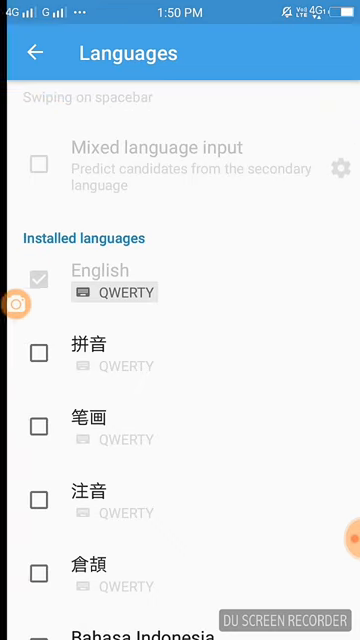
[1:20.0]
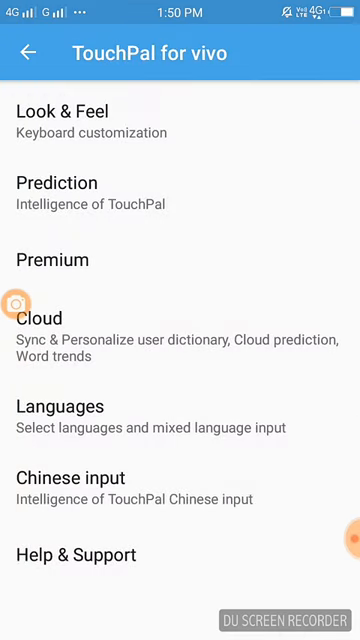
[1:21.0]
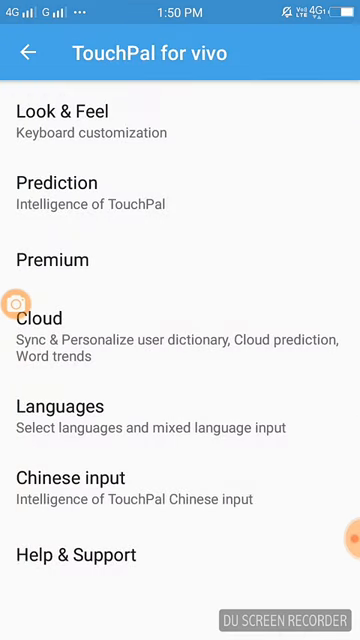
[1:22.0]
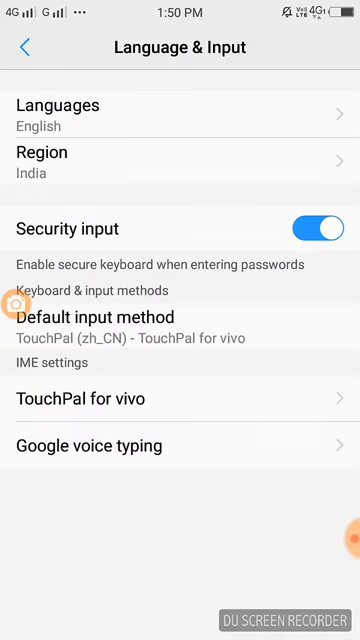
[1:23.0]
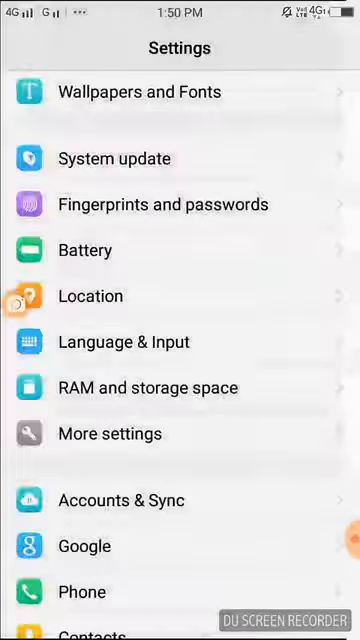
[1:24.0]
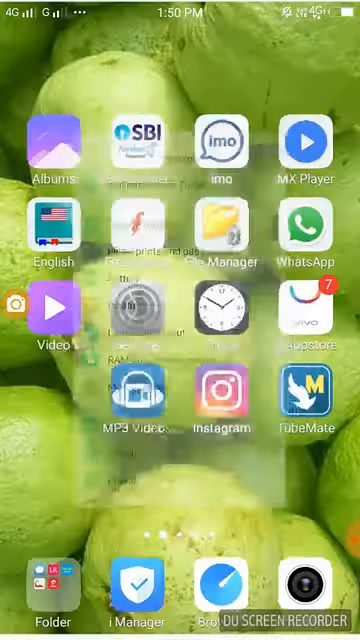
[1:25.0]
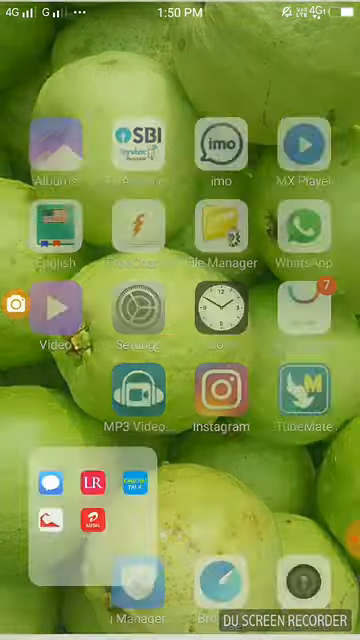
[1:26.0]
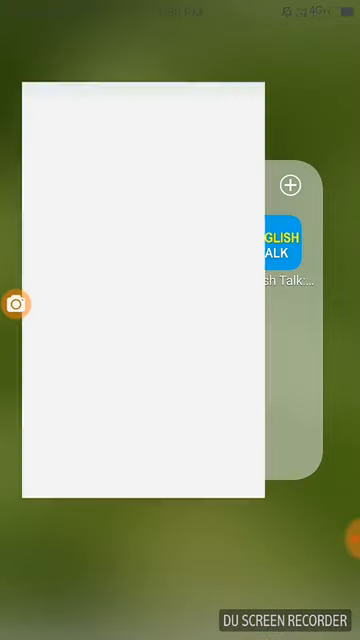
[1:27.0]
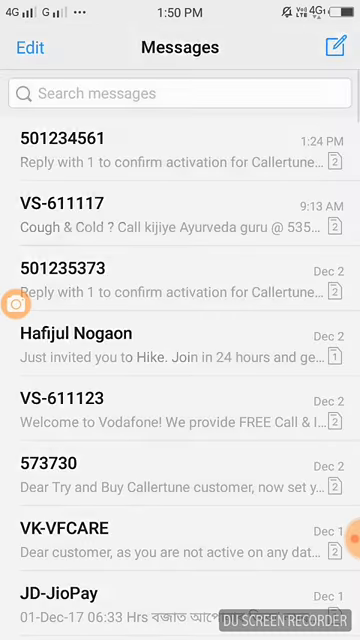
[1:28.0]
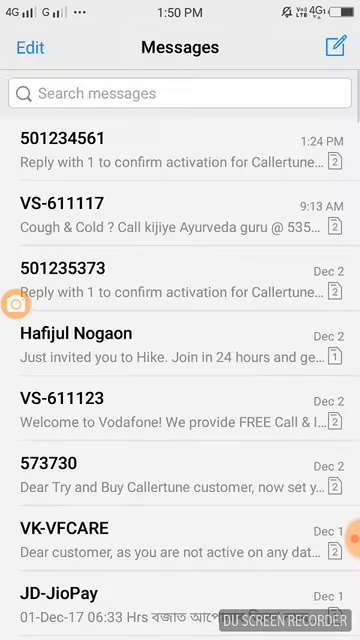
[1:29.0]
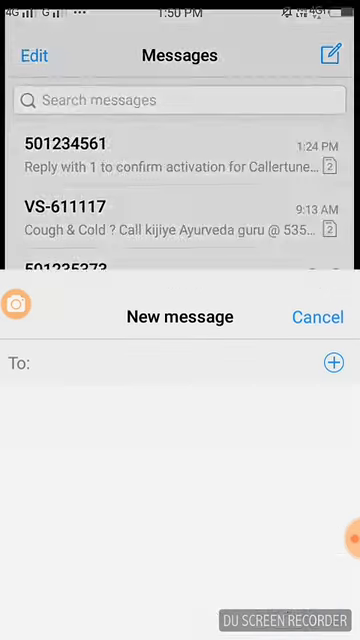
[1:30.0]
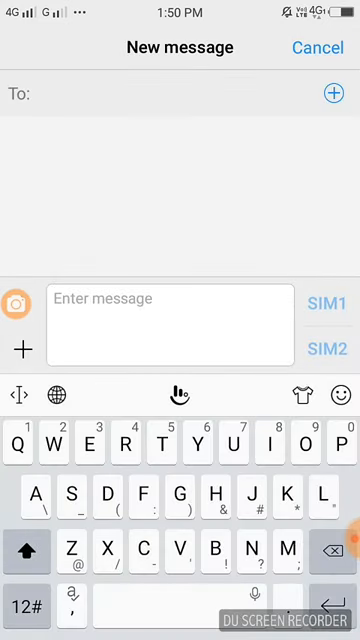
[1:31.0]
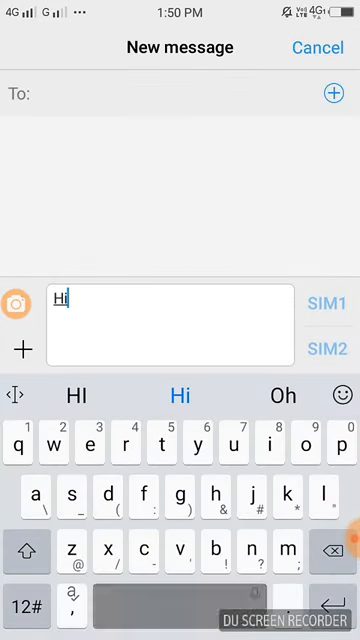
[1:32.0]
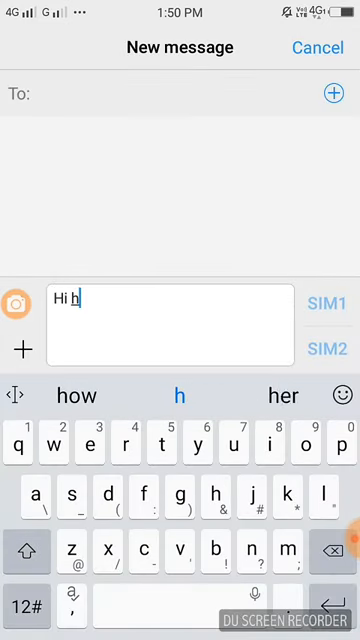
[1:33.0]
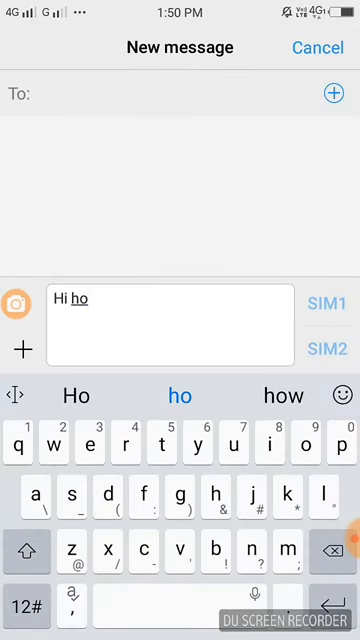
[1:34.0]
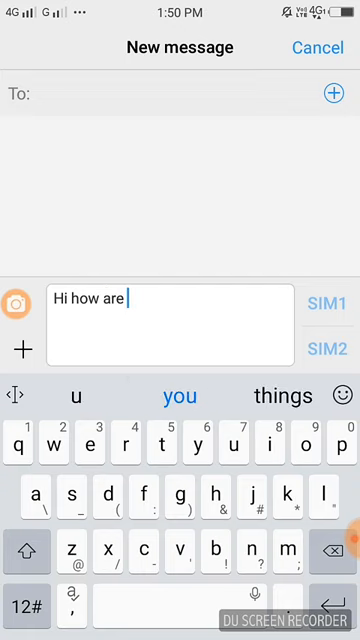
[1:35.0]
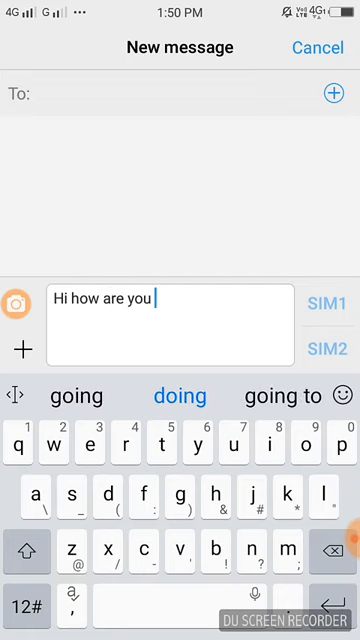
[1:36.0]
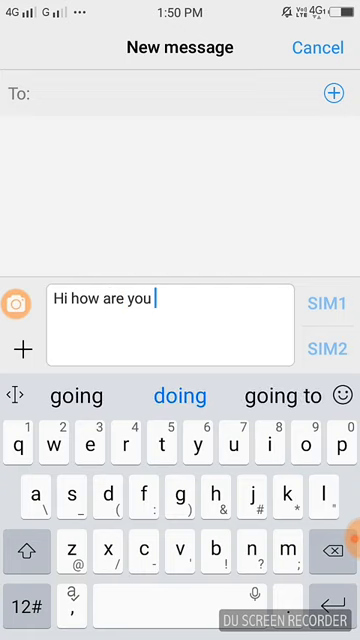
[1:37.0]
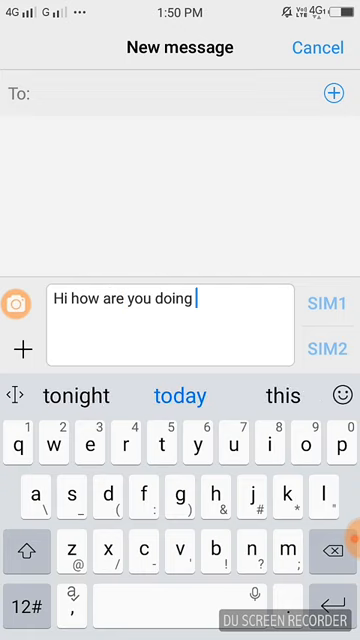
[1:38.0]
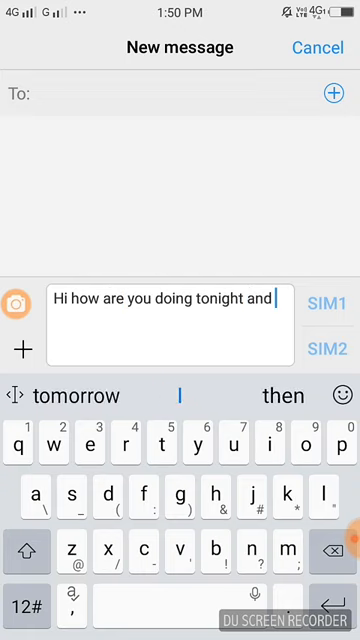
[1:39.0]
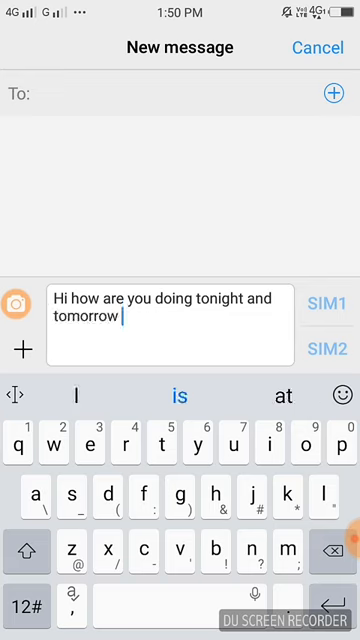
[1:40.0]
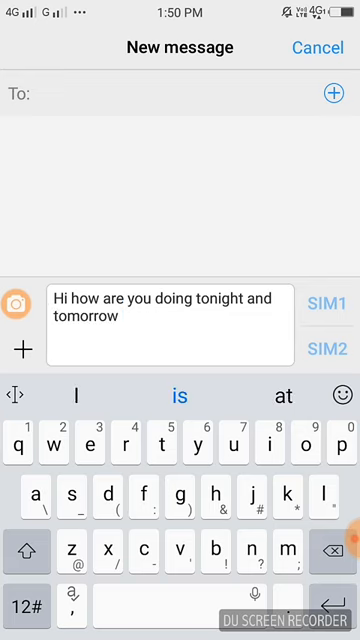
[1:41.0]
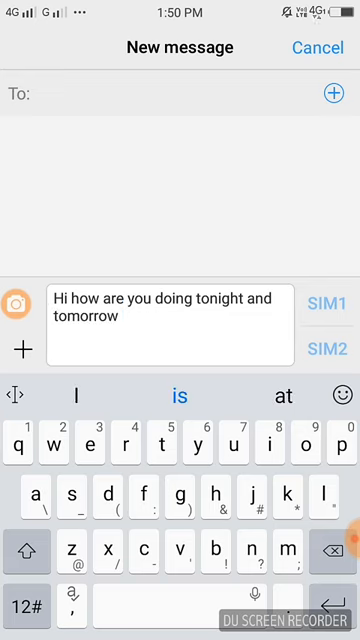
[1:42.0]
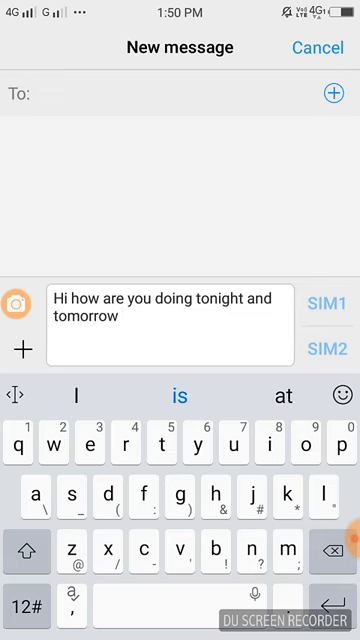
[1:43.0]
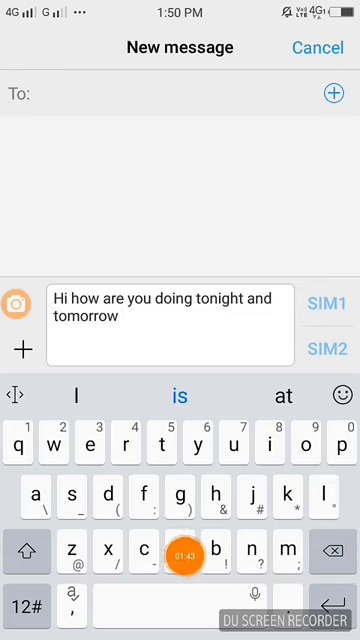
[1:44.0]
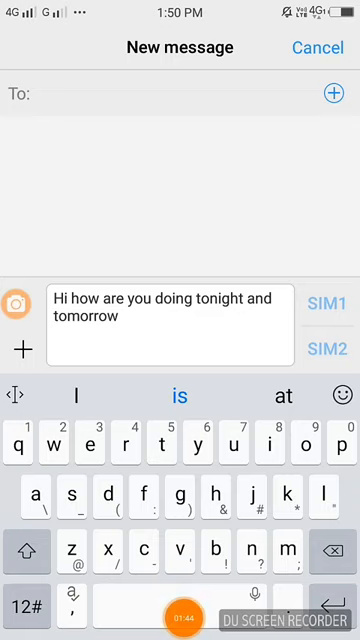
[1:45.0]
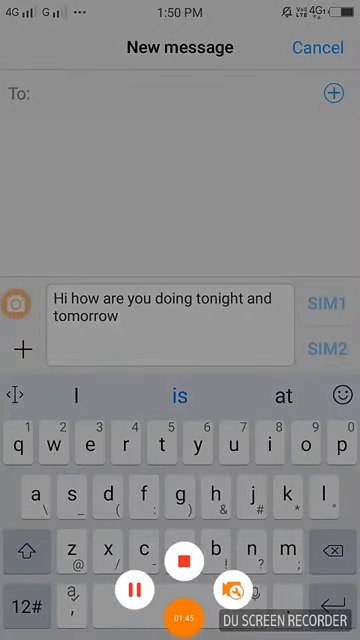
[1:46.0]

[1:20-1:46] The person swipes back from languages, continuing until they reach the phone's landing page. They click on a folder, then on the messages icon, and the messages window appears. They click on new message; the screen has a small input field at the bottom for entering messages. They type "hi how are you doing tonight and tomorrow", and then the screen grays out. At the very bottom the screen recorder is running, with a time apparently at 146, and then it pauses.